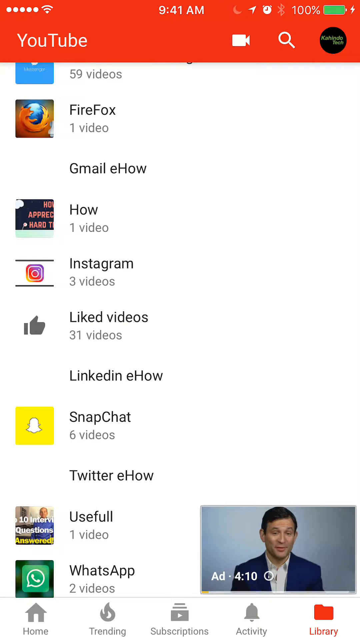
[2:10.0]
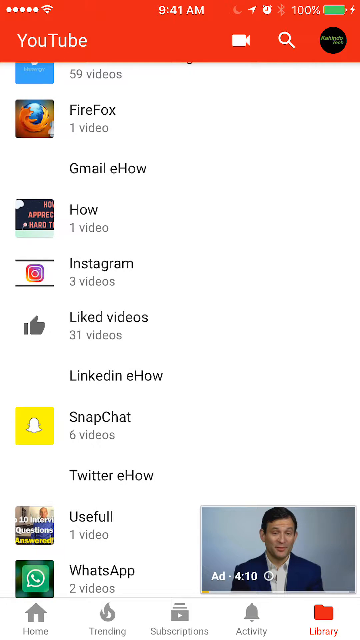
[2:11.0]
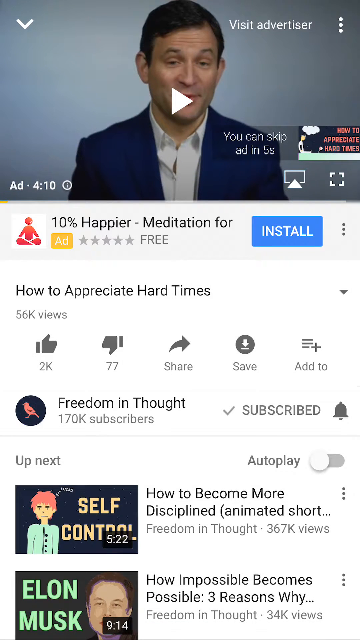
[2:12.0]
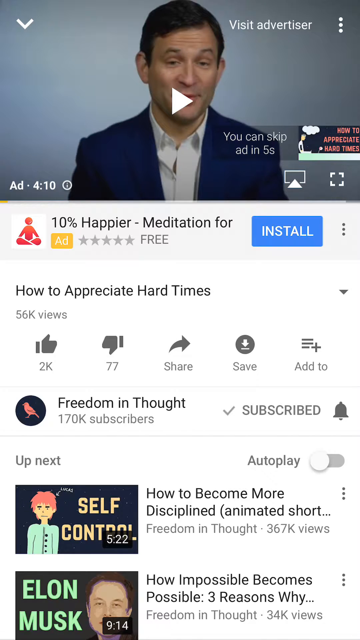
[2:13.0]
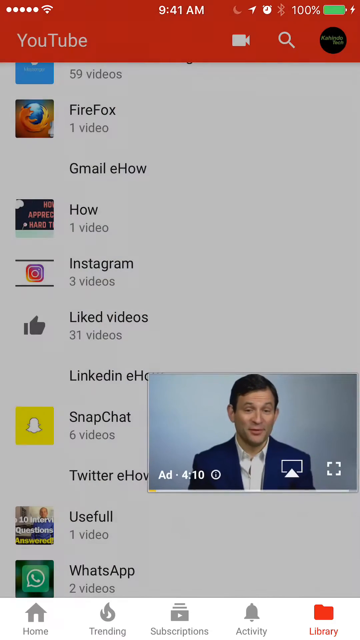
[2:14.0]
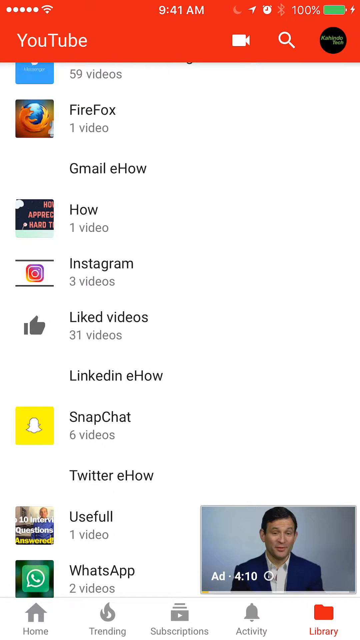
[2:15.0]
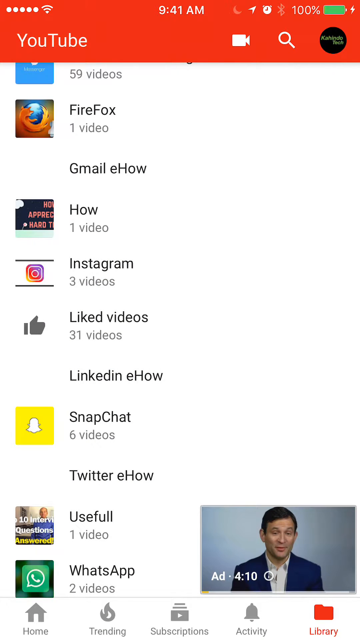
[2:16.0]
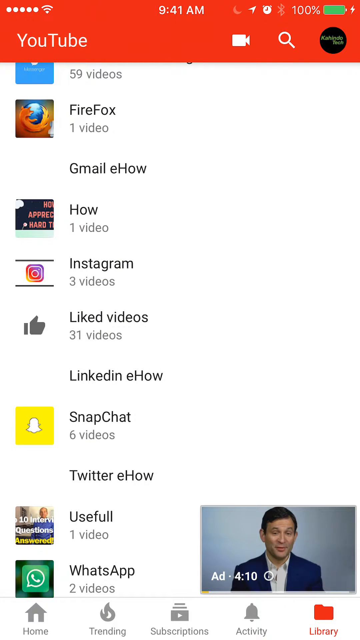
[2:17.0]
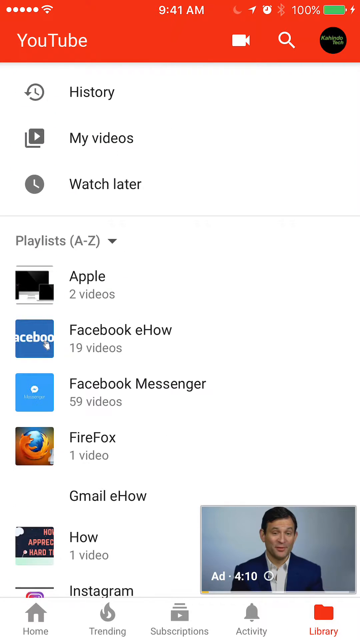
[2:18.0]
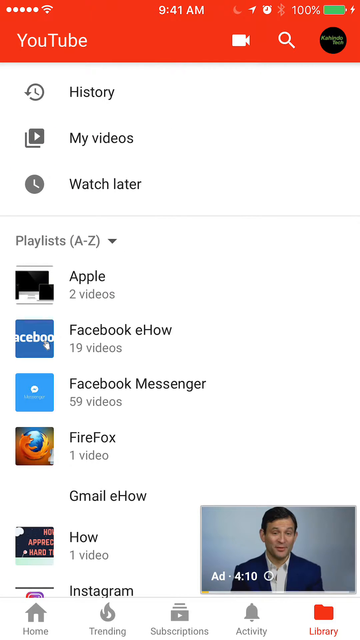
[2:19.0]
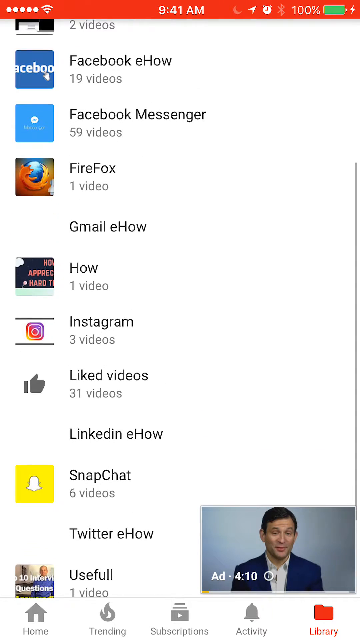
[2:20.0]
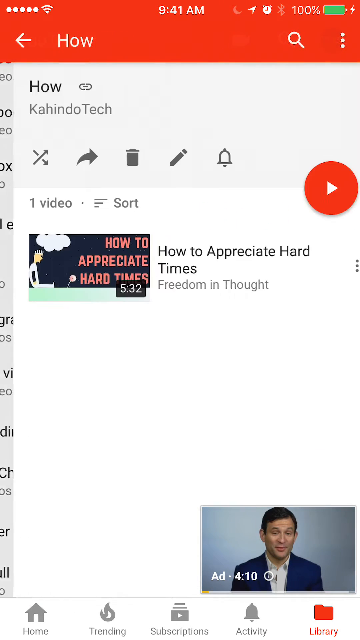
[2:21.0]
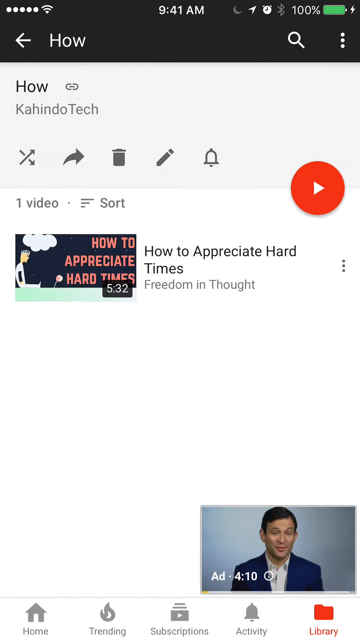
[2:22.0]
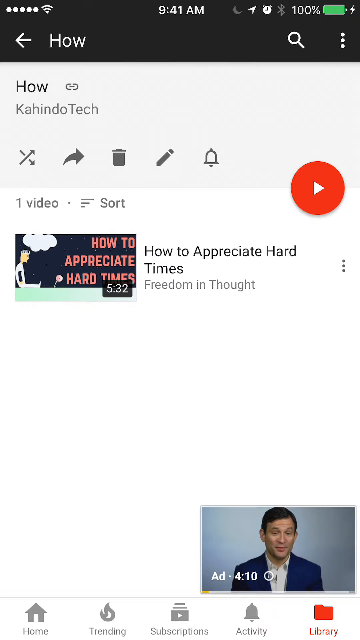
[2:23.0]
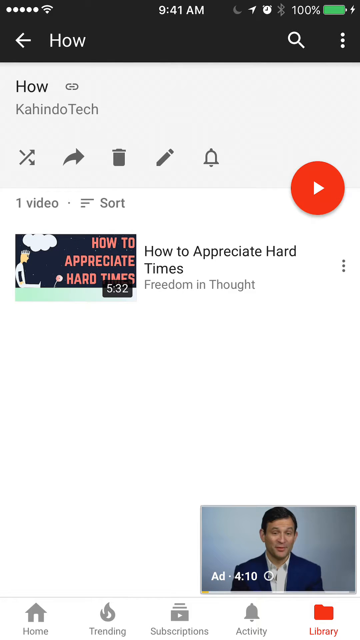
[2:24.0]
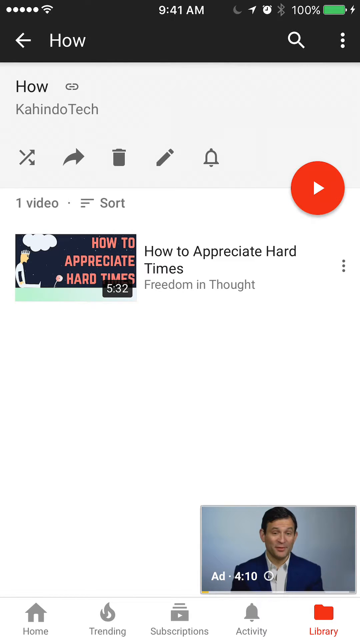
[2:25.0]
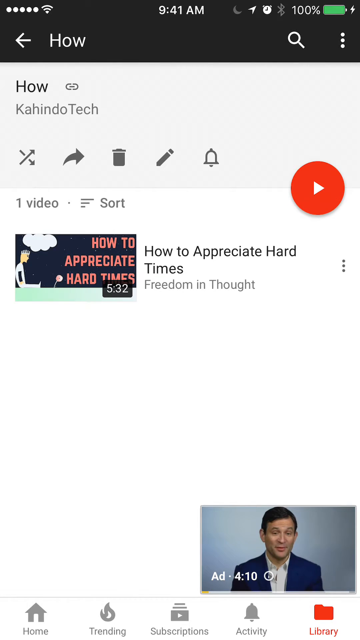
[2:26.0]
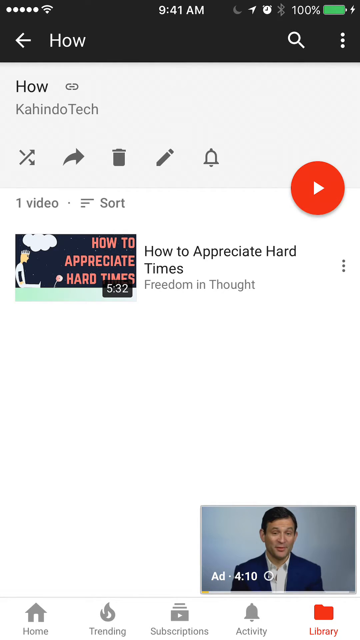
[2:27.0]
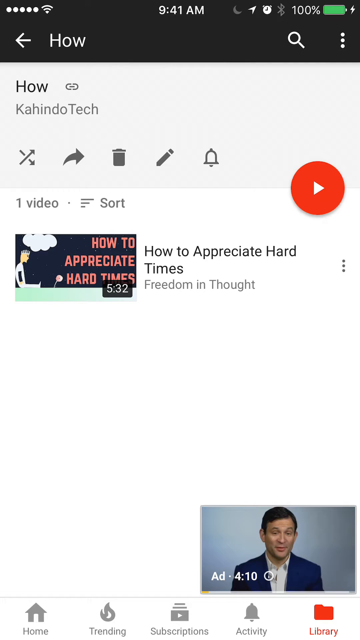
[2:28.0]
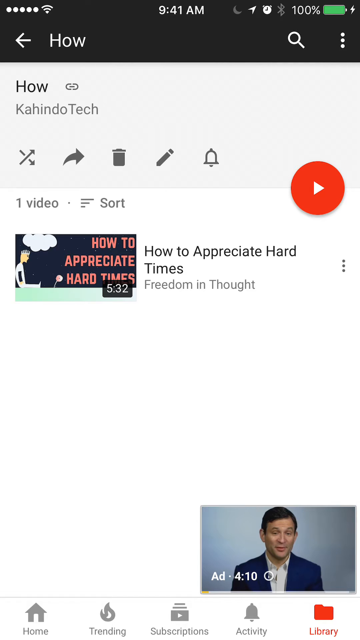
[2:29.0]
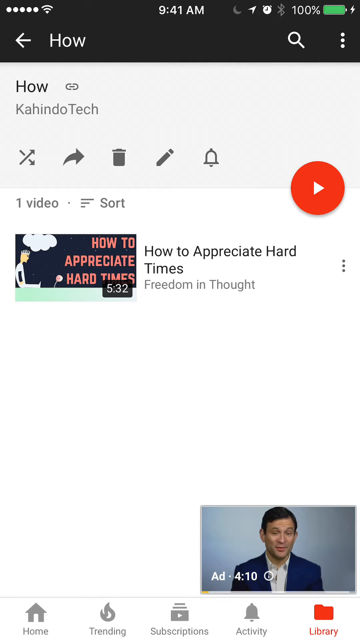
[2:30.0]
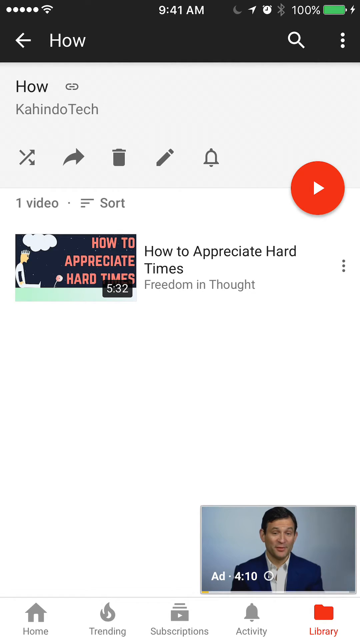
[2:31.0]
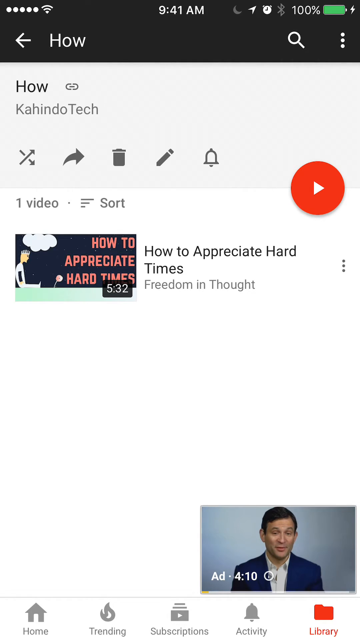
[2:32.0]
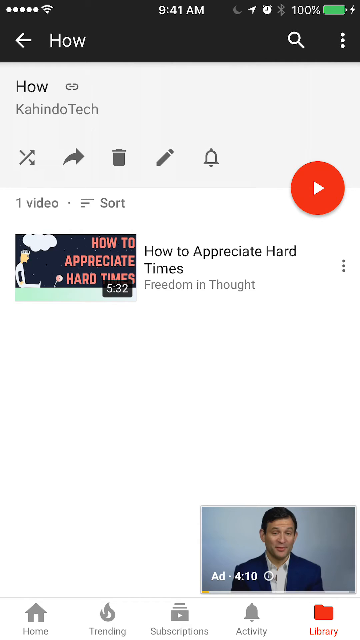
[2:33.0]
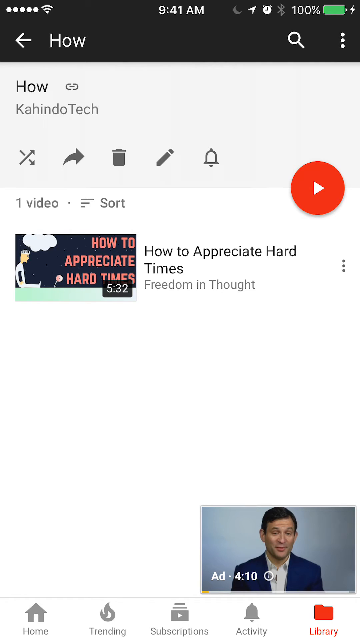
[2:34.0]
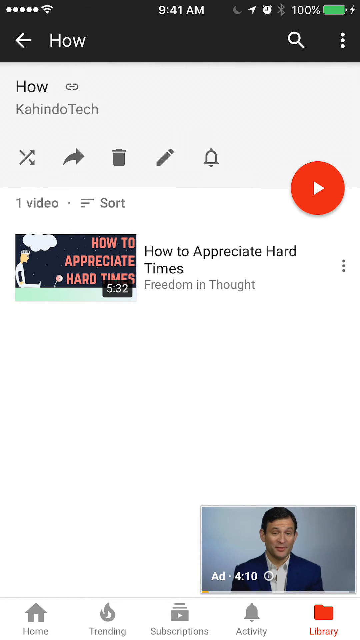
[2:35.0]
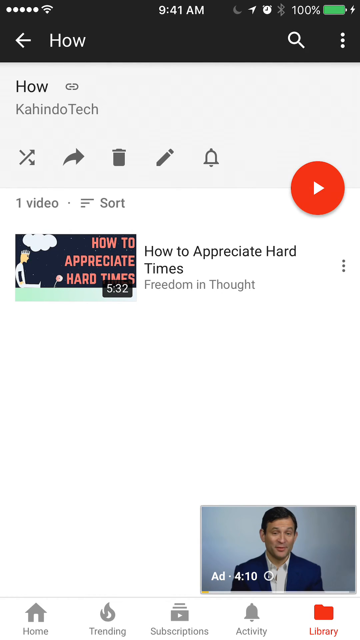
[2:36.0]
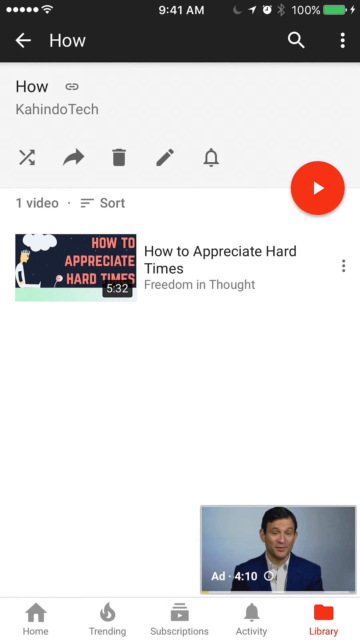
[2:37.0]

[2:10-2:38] The YouTube app on a mobile device is on the library page showing a long list of the user's created playlists. On the bottom right of the screen is a small video thumbnail of an ad playing on a minimized video, showing a man with brown hair, a blue blazer and a white button-down shirt speaking. The user clicks on the video, the page maximizes, and the video shows the ad with the man in the blue blazer still paused. After a second or two, the user minimizes the video again, returning it to the bottom right corner, and the library page with the long list of playlists is visible again. The user scrolls up to the top, where menu items "history", "my videos" and "watch later" appear, then kind of scrolls back down a little to the list of playlists and clicks the playlist titled "how", which opens to show one video titled "How to Appreciate Hard Times".